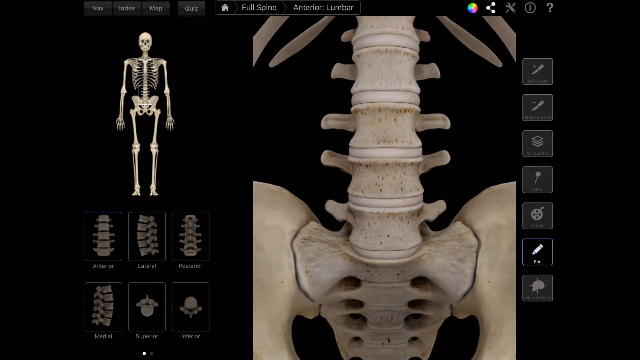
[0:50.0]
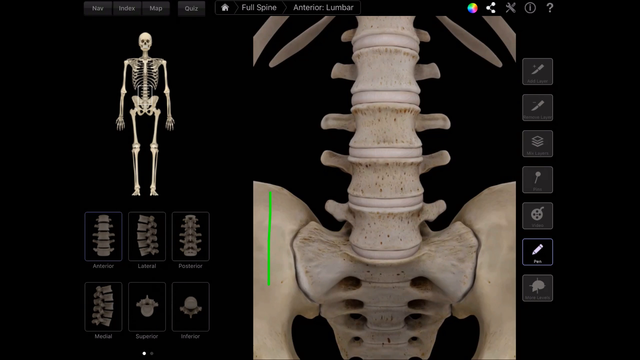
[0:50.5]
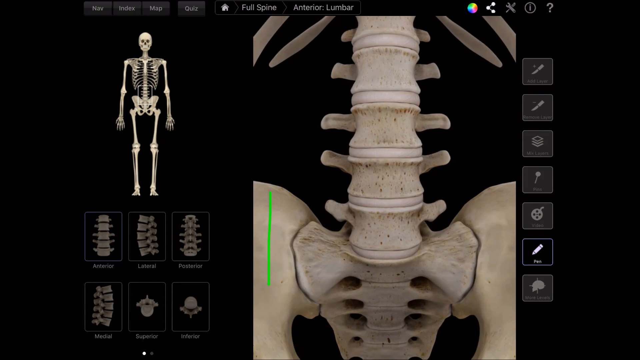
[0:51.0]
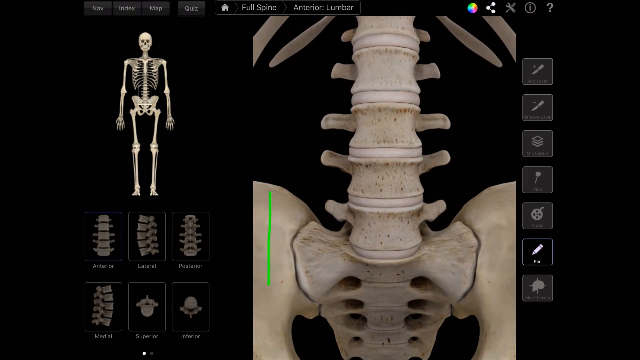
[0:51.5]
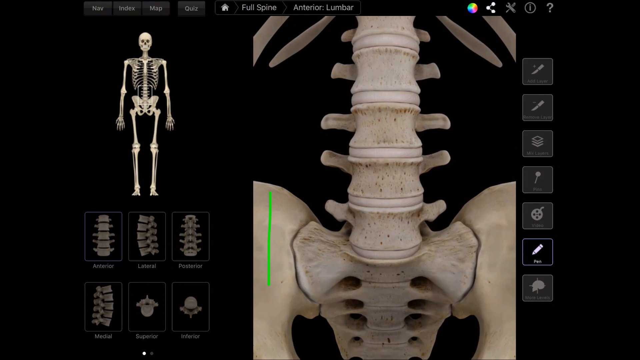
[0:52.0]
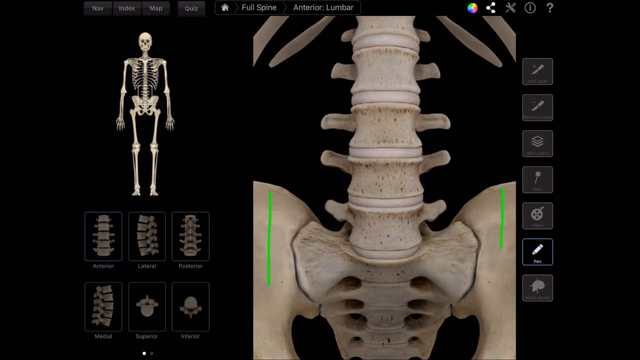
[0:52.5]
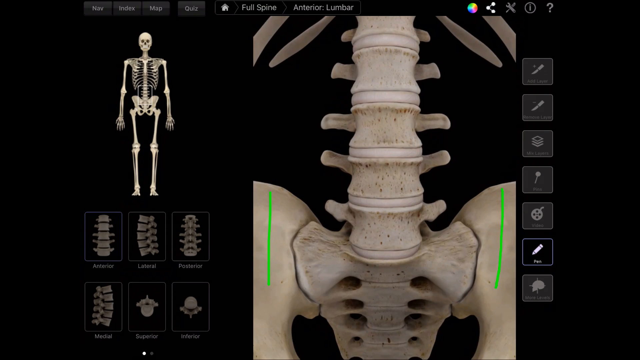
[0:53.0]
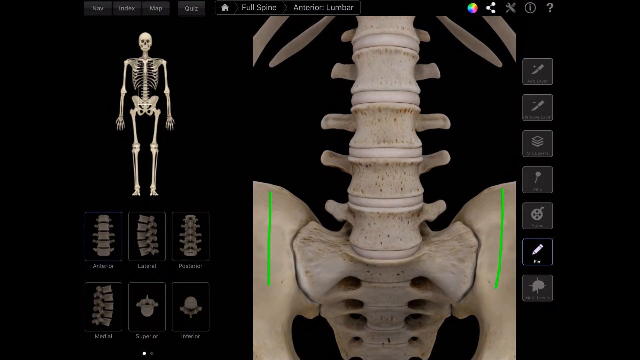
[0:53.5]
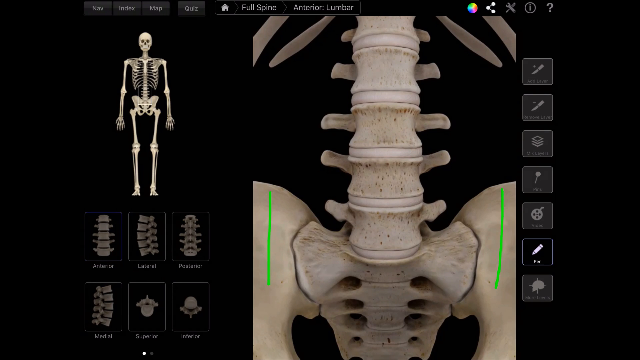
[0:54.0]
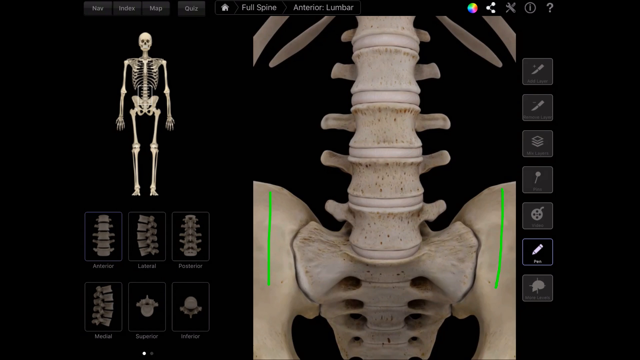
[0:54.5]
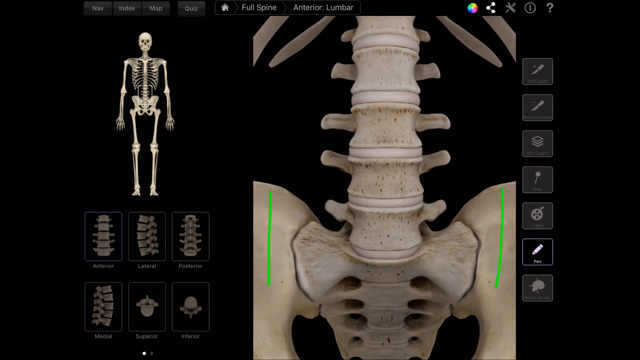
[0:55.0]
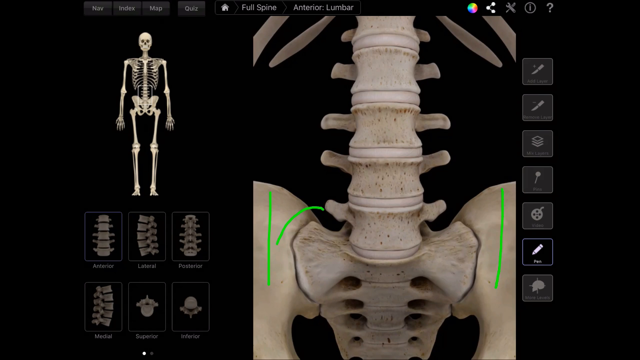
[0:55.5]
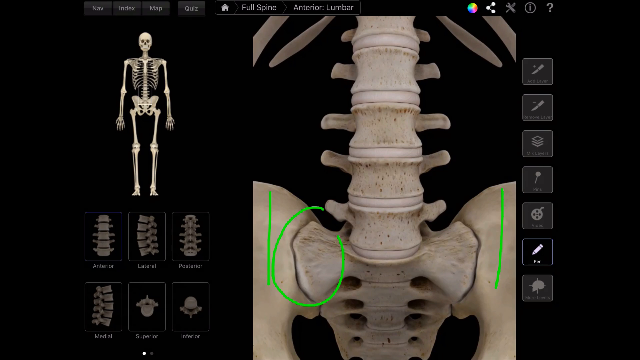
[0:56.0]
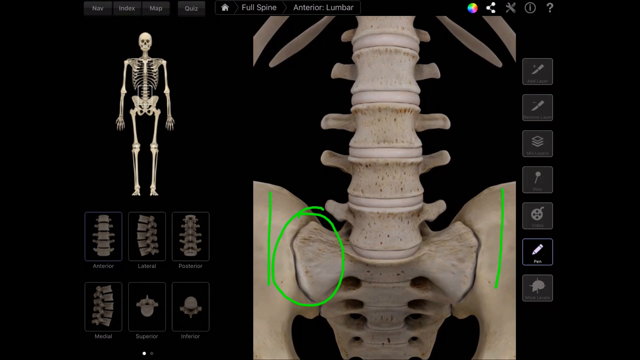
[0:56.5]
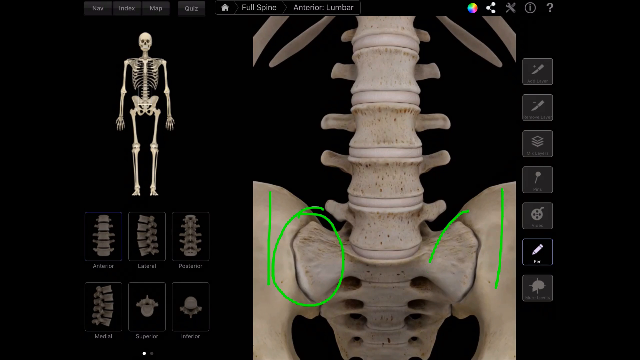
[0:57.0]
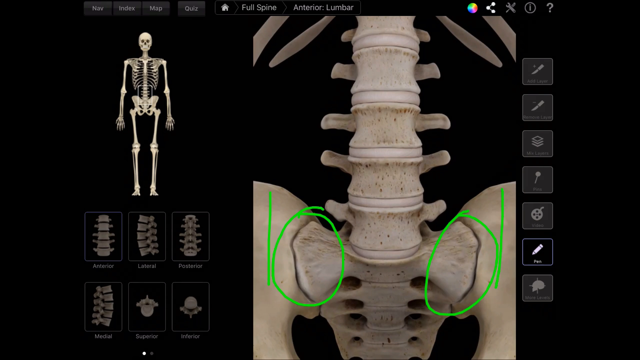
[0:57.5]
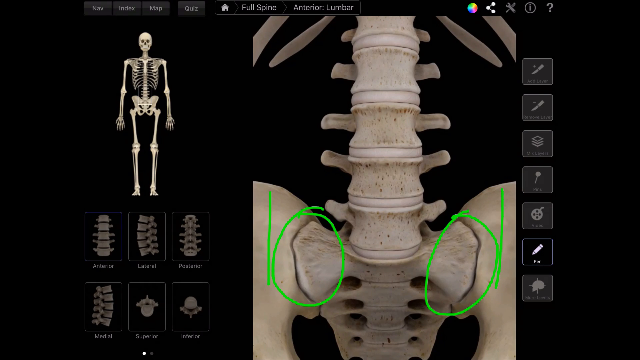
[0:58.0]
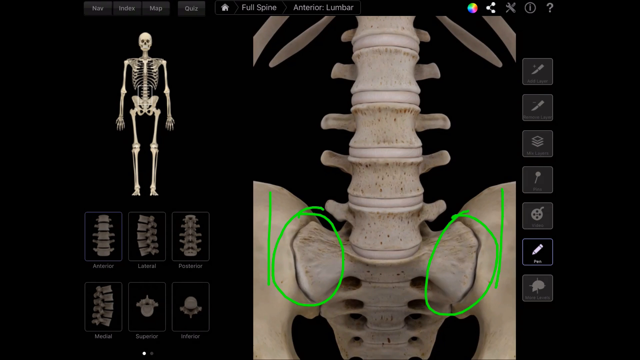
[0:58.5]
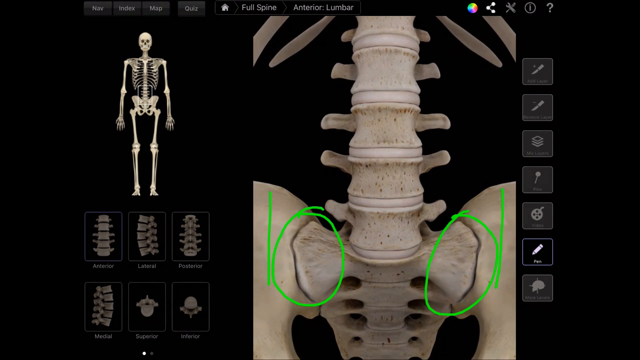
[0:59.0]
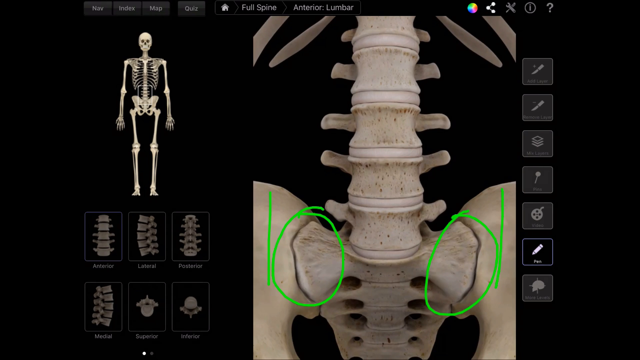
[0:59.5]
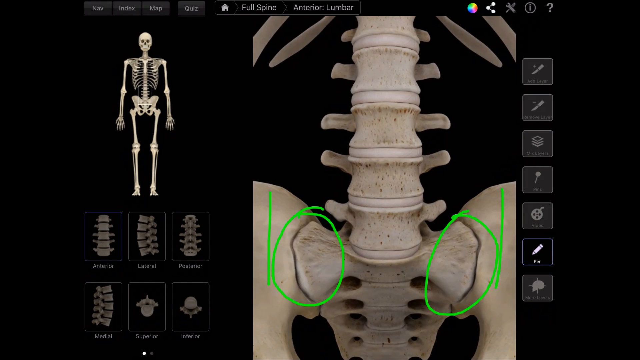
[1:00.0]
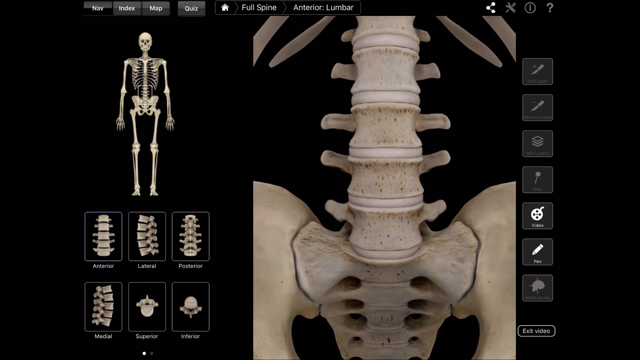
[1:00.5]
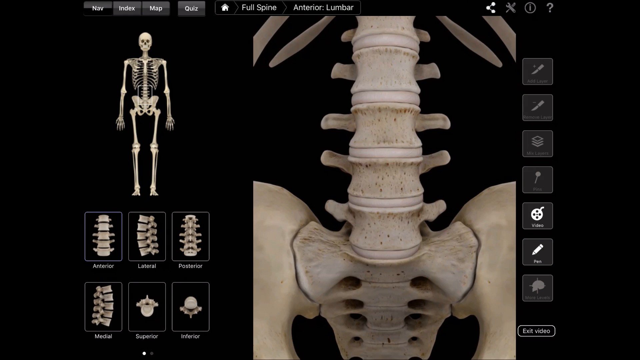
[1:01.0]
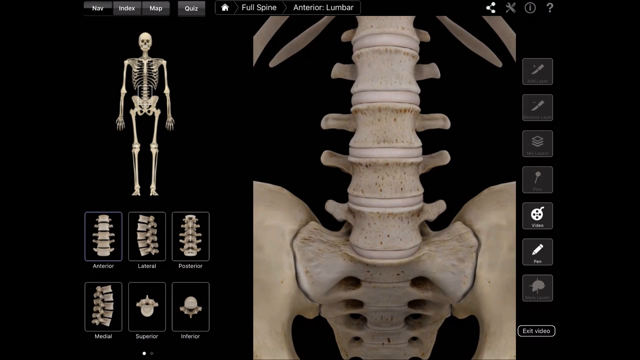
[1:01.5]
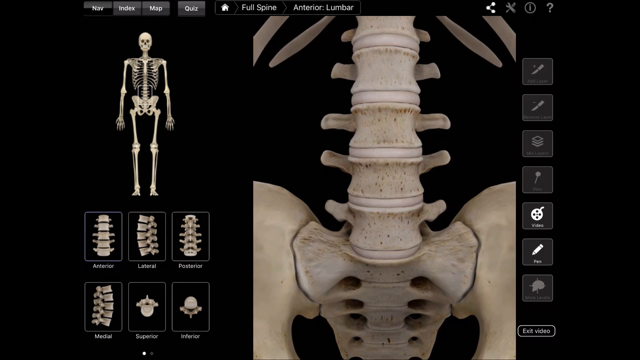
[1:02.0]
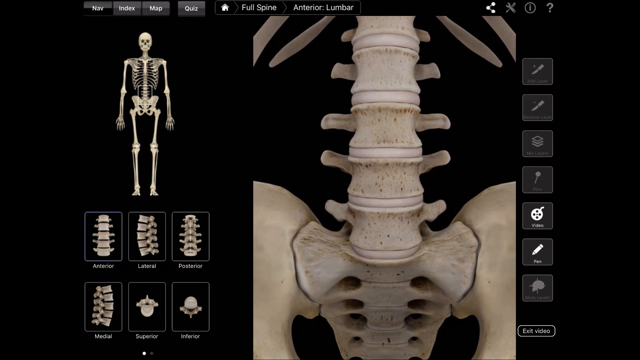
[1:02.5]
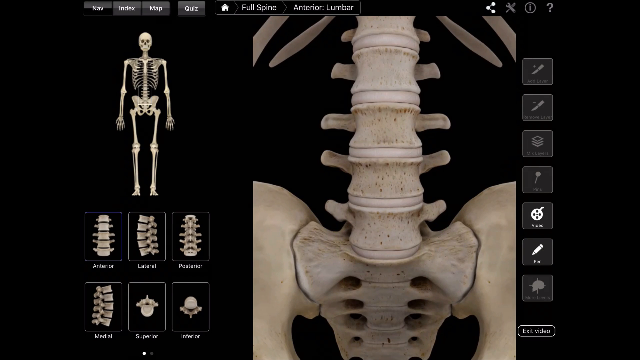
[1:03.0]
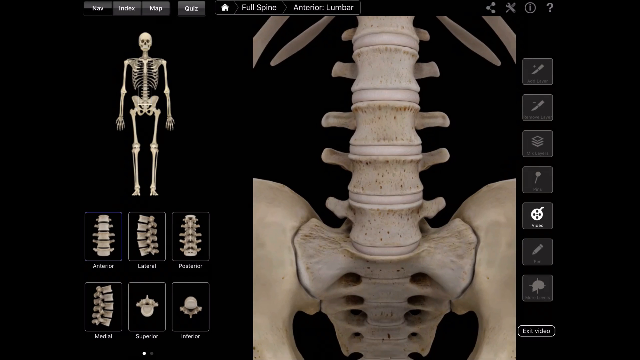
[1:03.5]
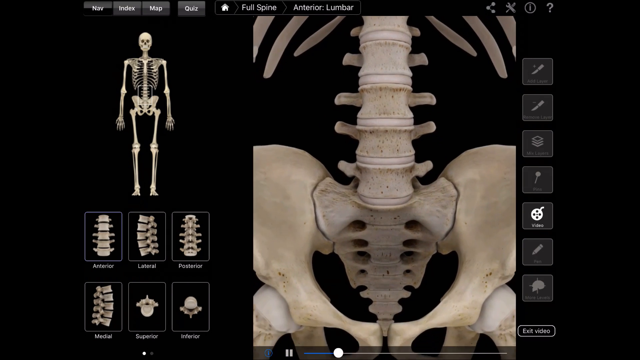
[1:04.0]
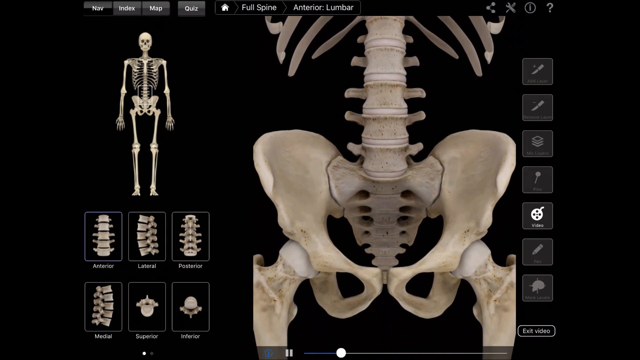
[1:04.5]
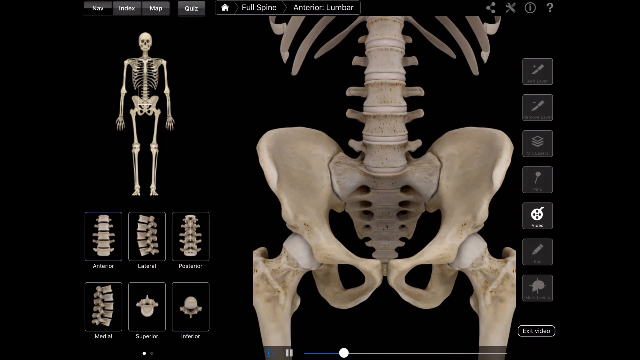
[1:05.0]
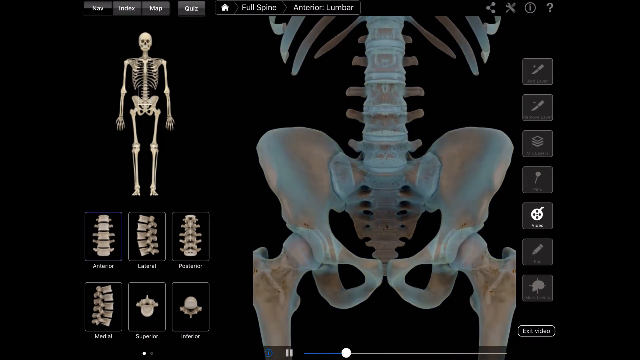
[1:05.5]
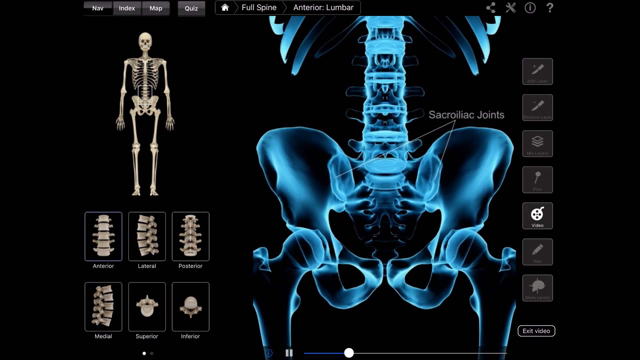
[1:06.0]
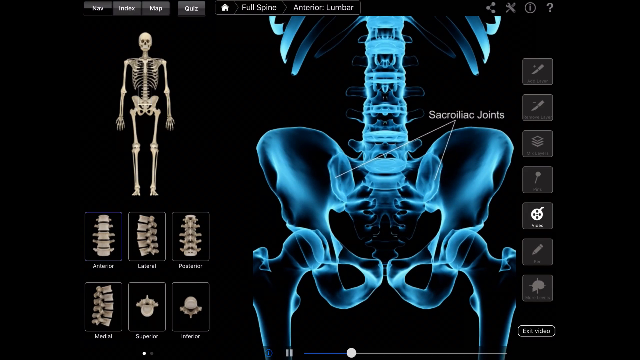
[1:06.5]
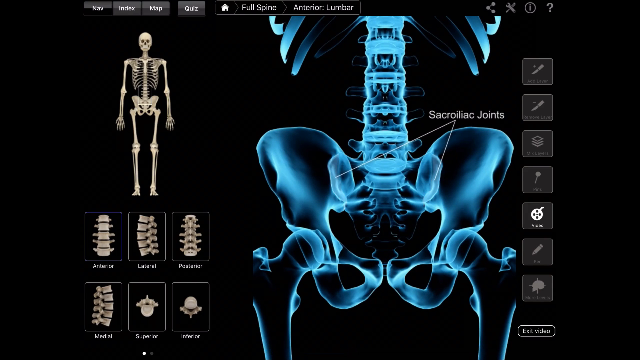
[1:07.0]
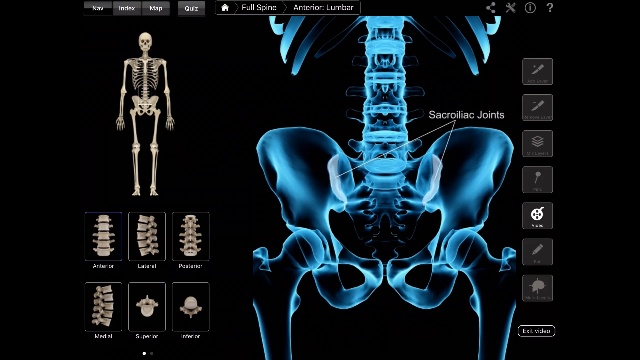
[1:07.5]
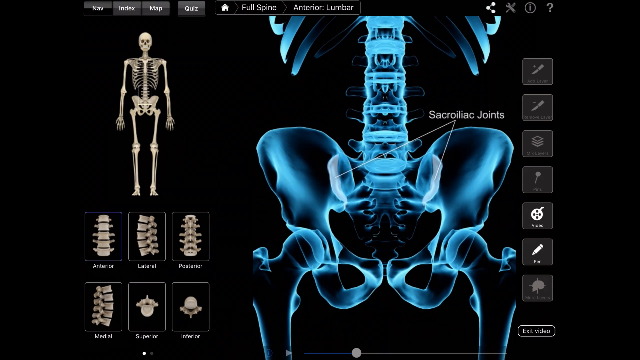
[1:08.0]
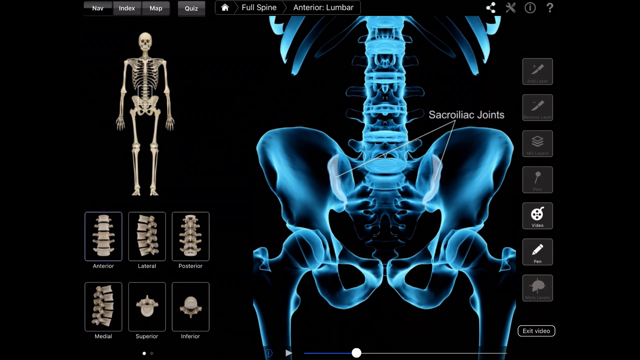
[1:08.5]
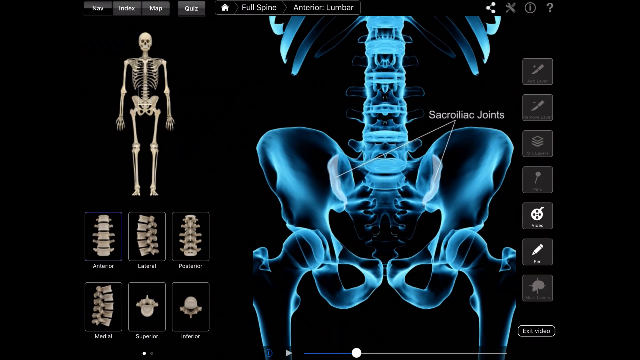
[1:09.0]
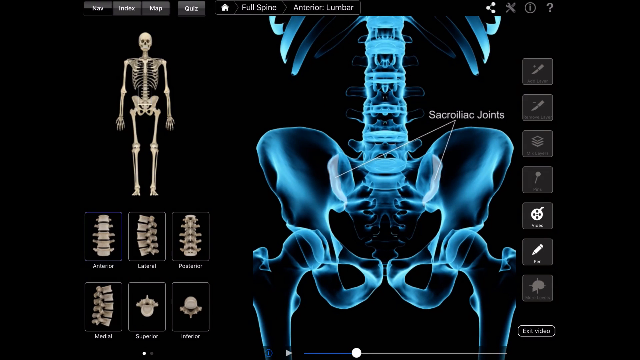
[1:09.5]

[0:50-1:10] The view stays zoomed in on the lower part of the spine where the discs meet the pelvic bone. Two green lines are drawn on both sides of the hip bone, running vertically down and framing the spine on the left and right. The area where the hip bone connects to the spine is then circled; these appear to be joints. The view zooms back out to something that looks more like an x-ray, and the joints circled before are now labeled as the sacroiliac joints. They are somewhat highlighted and look very small against the entire bone.